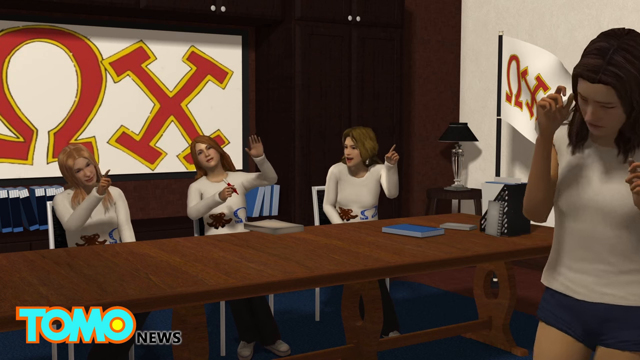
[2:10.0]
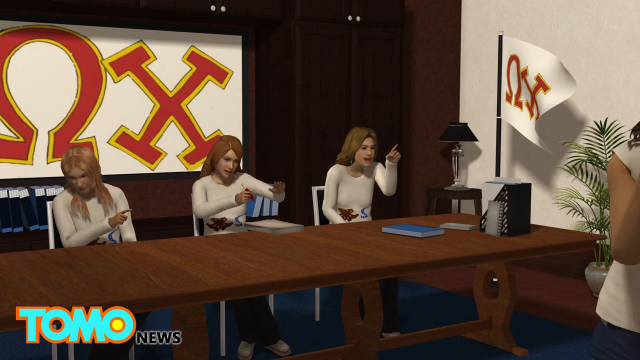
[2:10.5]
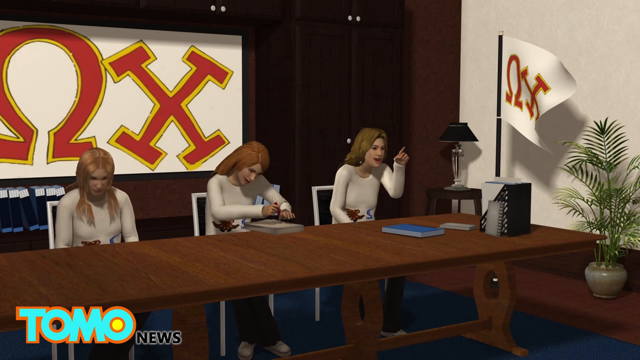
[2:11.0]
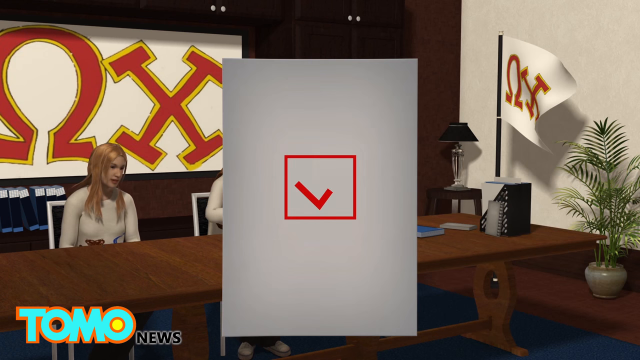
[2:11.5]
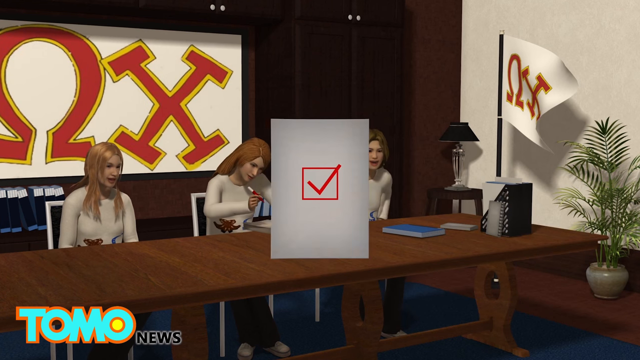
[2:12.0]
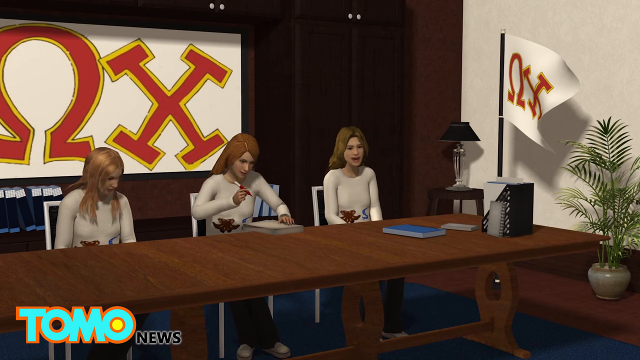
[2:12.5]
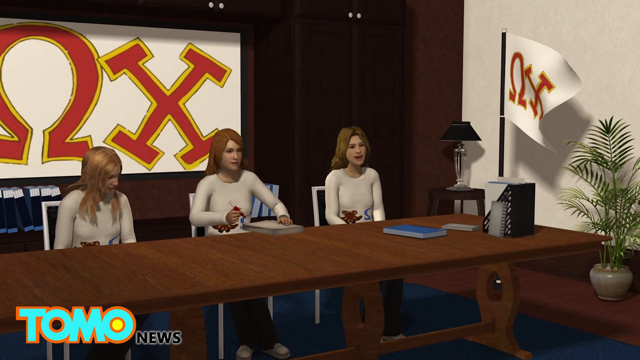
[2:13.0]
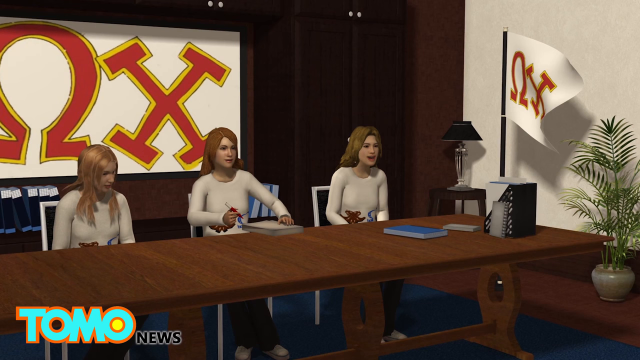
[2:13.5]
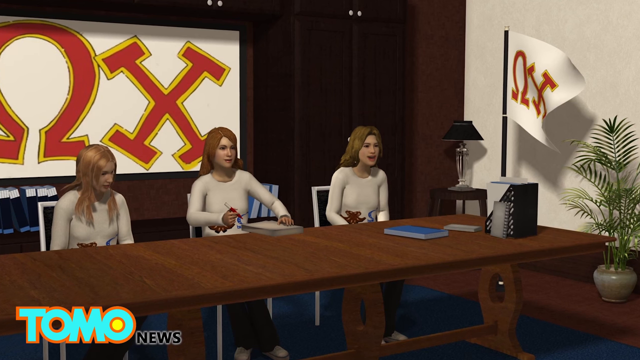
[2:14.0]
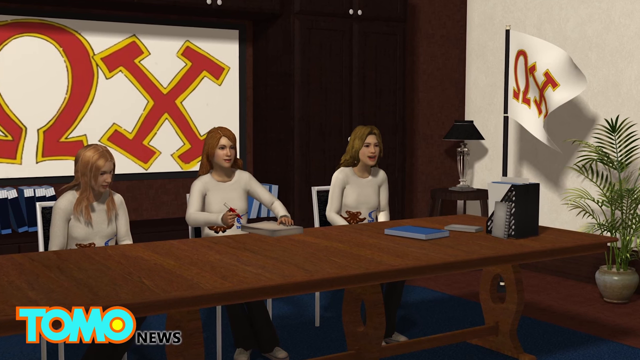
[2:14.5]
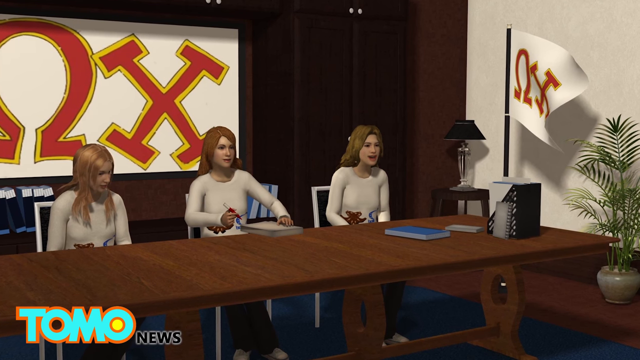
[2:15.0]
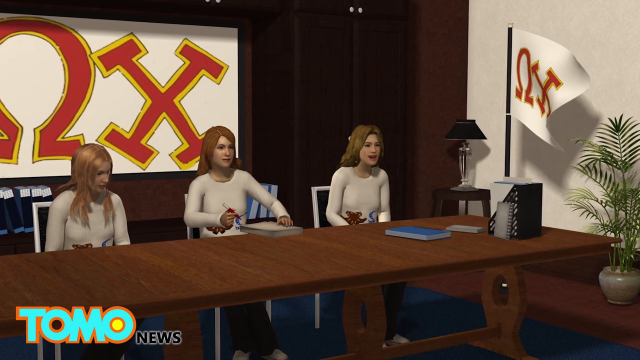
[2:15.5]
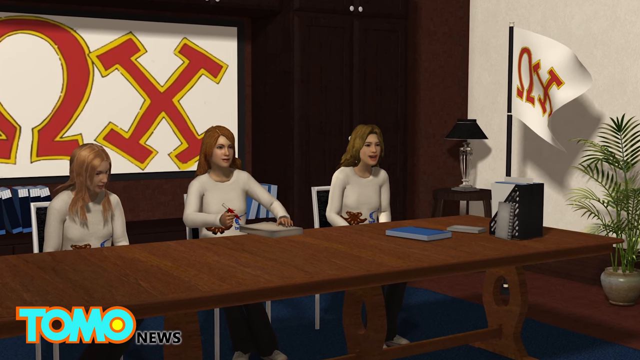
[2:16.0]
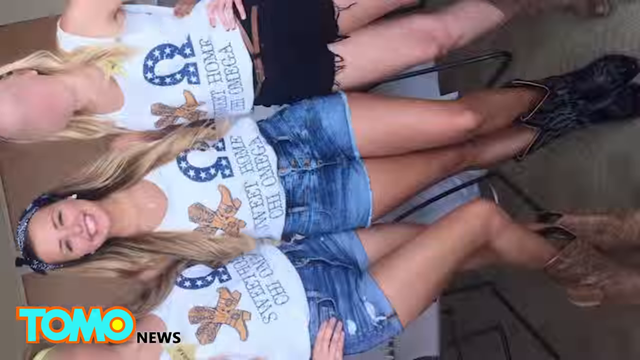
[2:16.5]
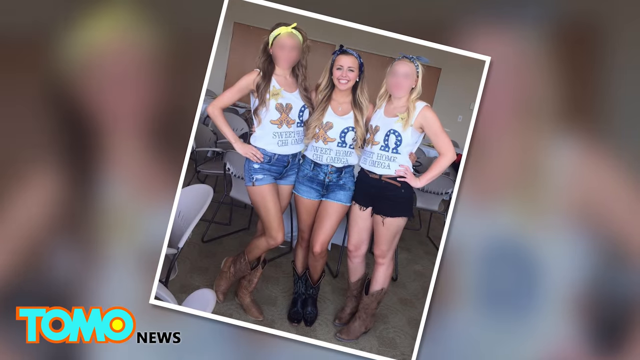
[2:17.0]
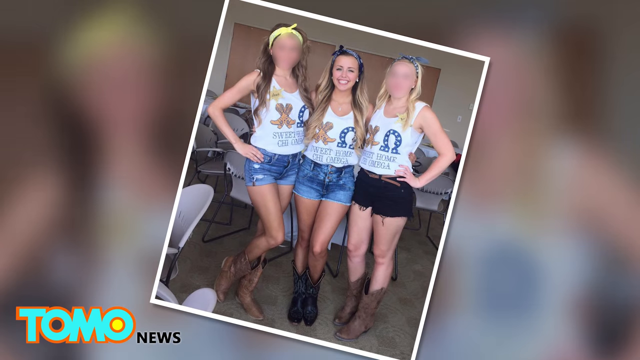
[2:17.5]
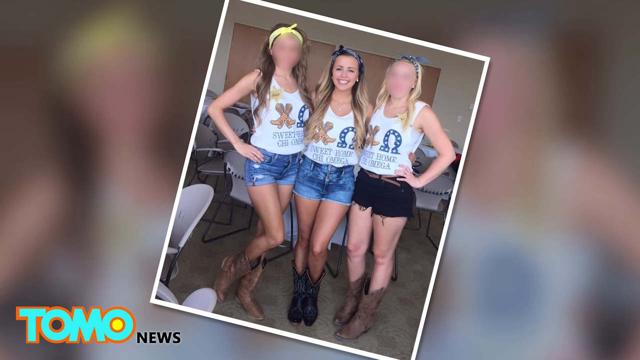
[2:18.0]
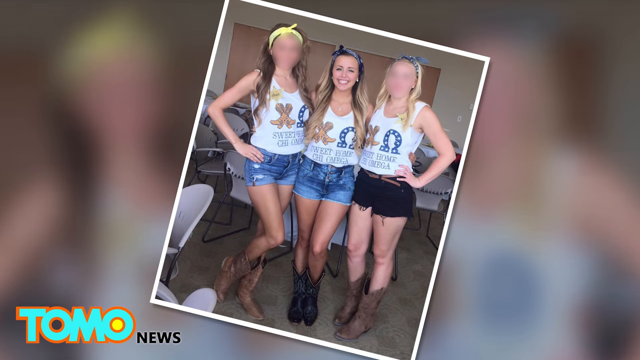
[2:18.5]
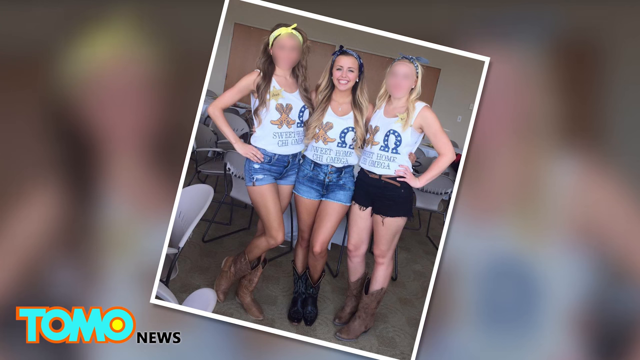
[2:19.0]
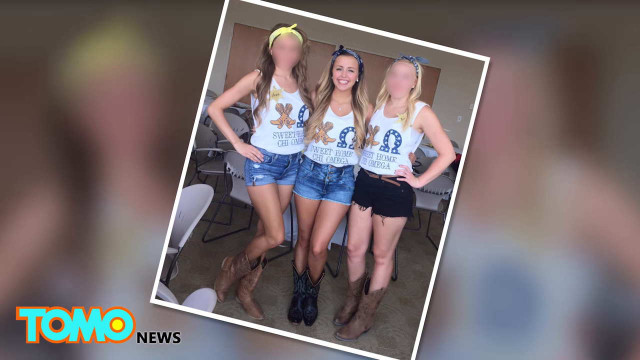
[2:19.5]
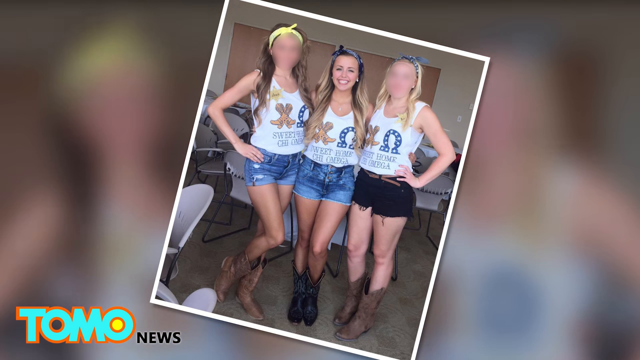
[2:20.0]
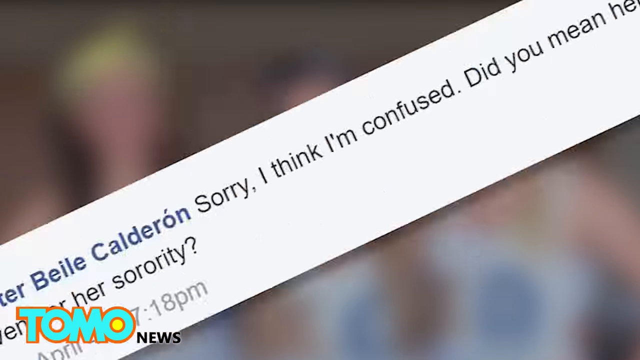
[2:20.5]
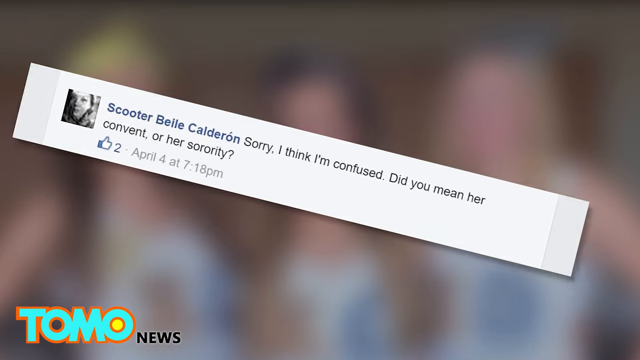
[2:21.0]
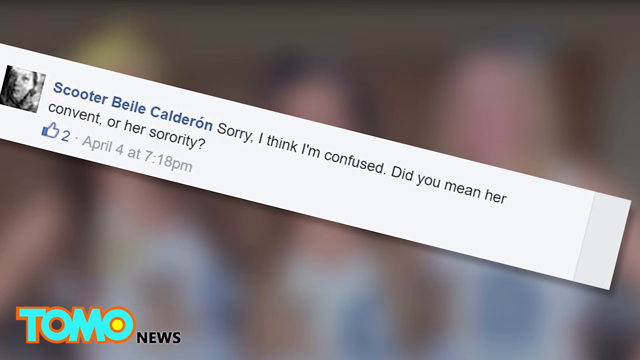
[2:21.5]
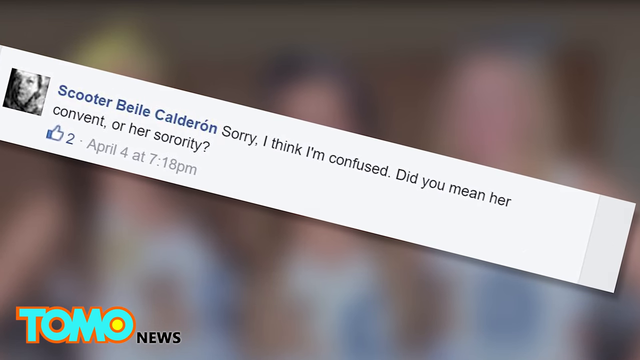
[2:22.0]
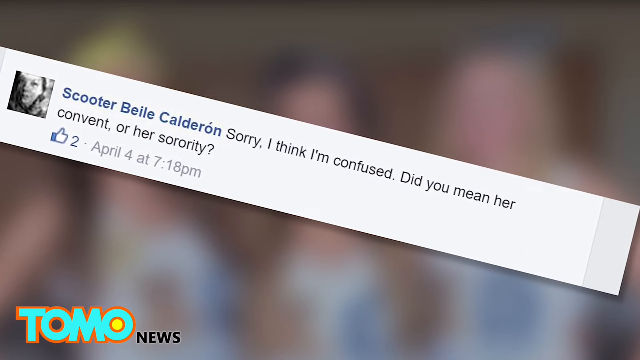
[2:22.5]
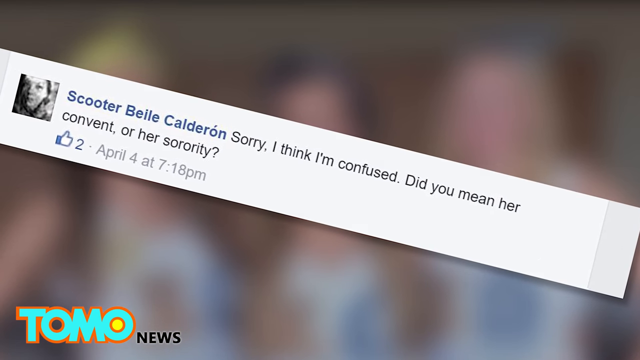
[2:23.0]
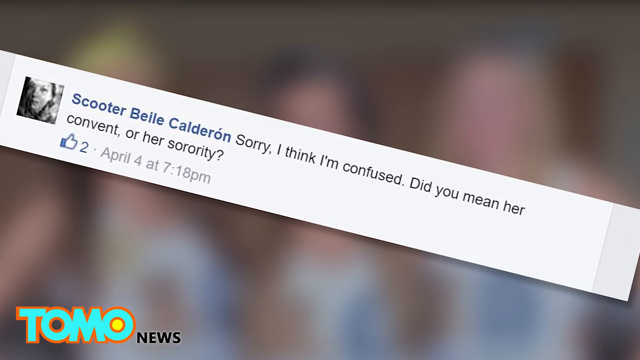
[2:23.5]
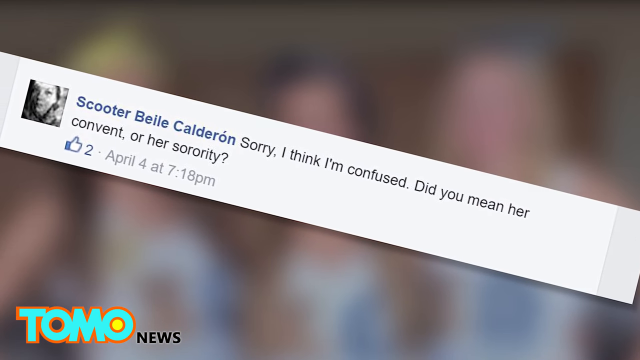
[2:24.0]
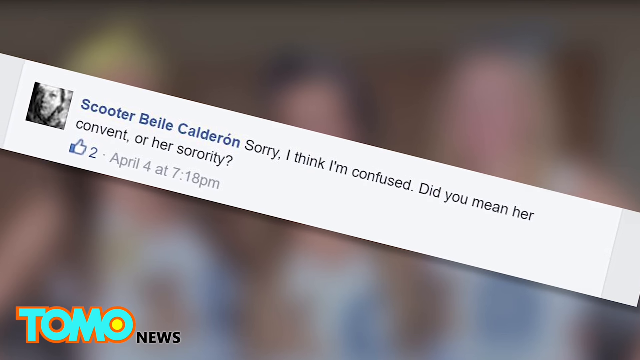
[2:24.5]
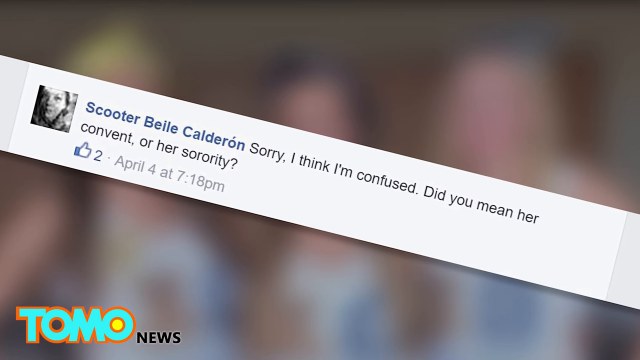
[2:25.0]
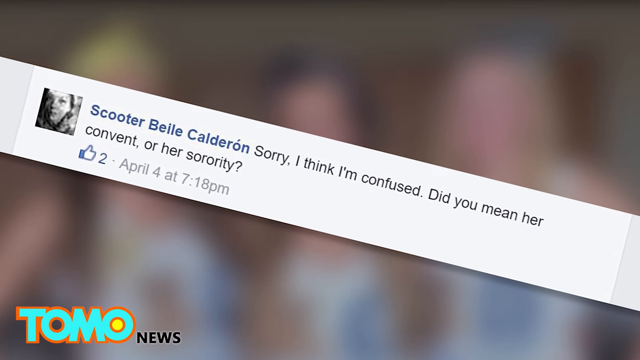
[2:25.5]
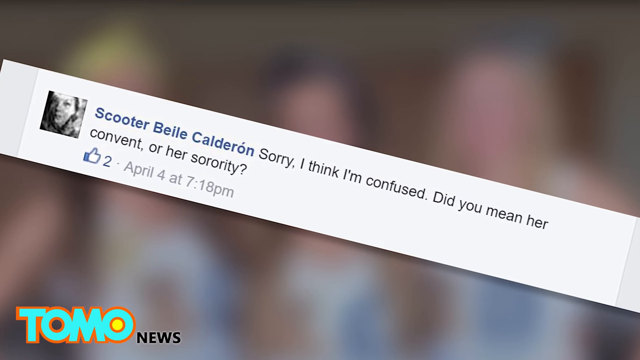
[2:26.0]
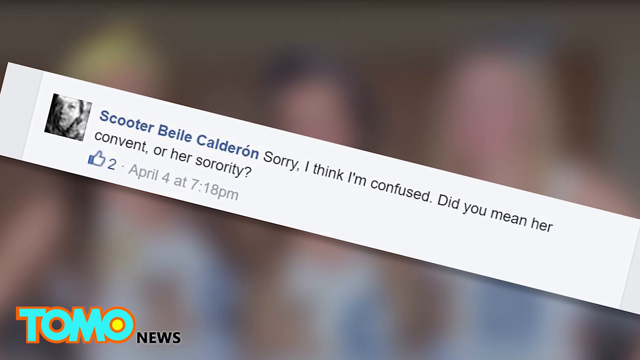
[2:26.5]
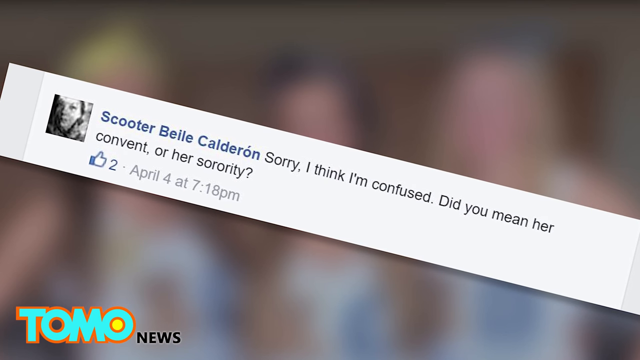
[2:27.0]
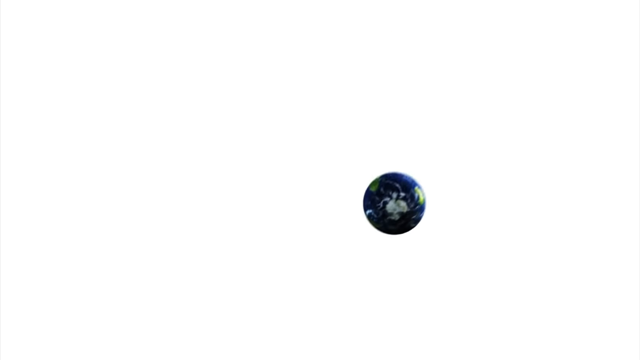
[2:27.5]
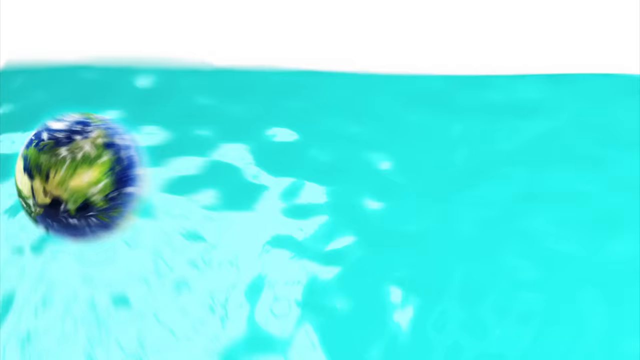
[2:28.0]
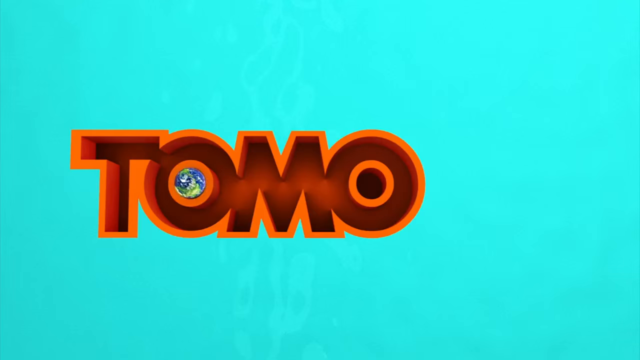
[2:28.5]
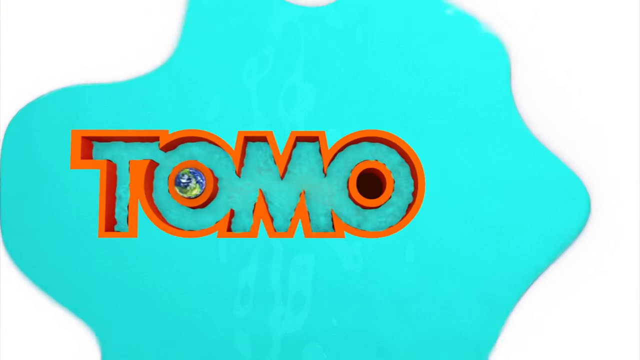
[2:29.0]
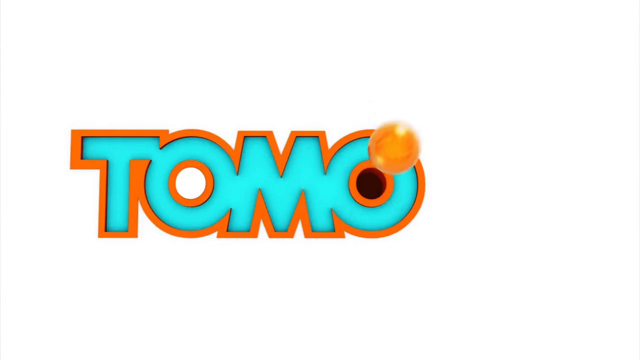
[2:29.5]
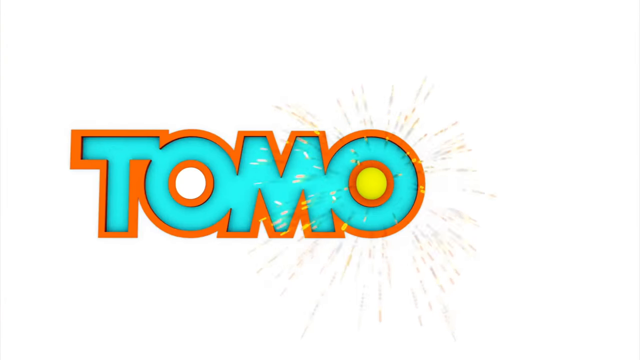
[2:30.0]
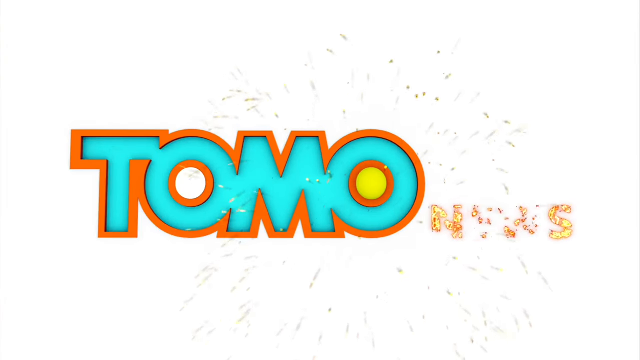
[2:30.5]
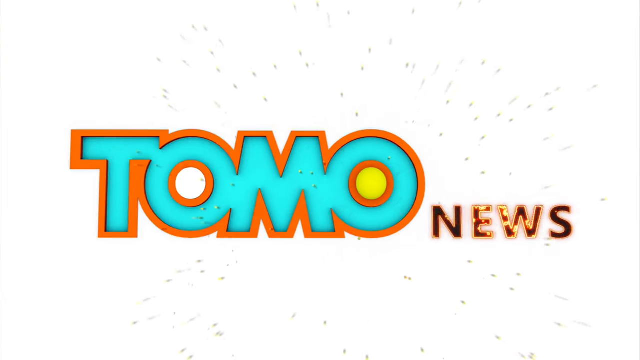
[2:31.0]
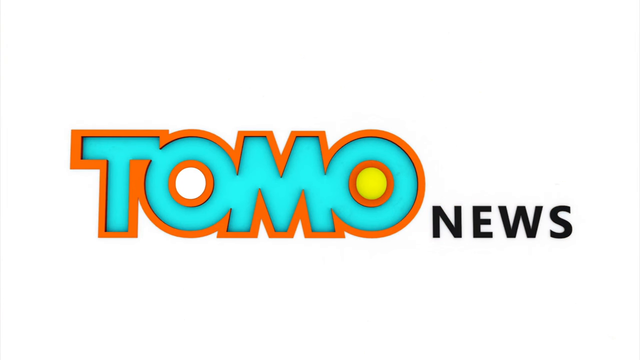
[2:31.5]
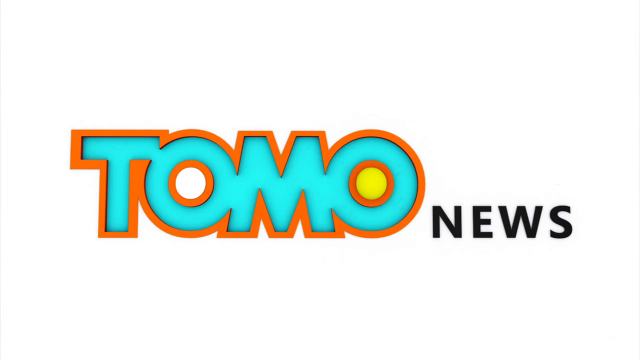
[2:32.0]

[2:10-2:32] In a computer-generated animation, a large room has a large poster board on the back wall and a flag, both bearing the same logo of Greek letters, chi, like an X. Three young ladies sit in three chairs, and there is a very large brown table. The animation shows them kind of moving around. A box with what looks like a red check mark comes onto the screen. The animation then ends and a still photograph appears of three young ladies wearing very tight, very short denim shorts and tank tops, smiling and posing for a camera. Only one girl's facial features can be seen; the other two faces are blurred.